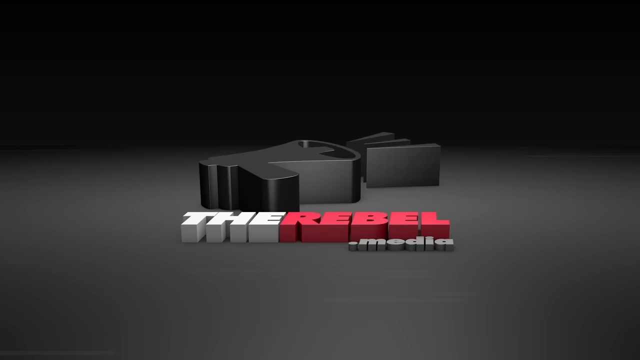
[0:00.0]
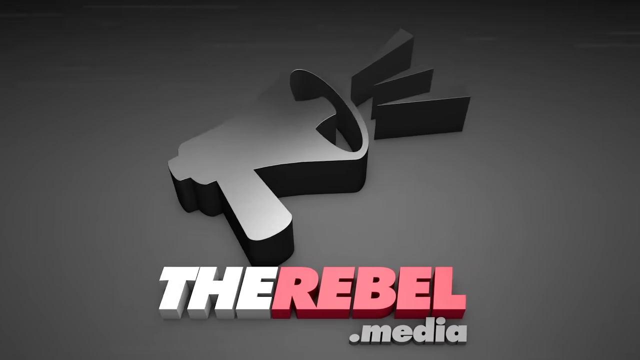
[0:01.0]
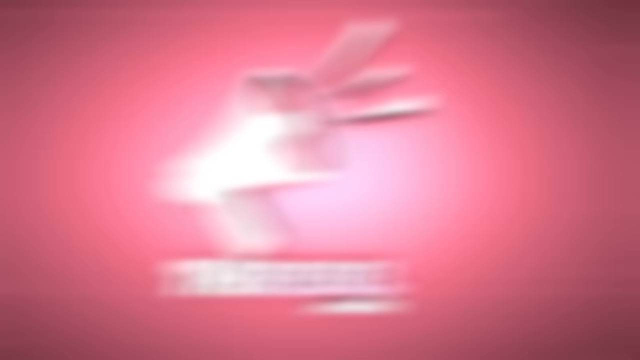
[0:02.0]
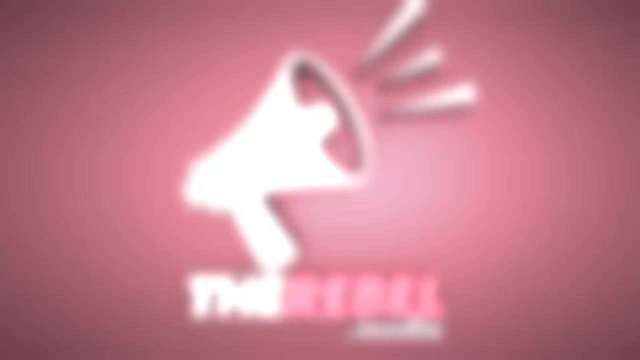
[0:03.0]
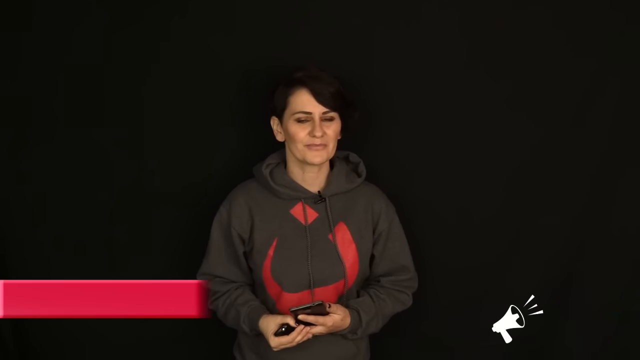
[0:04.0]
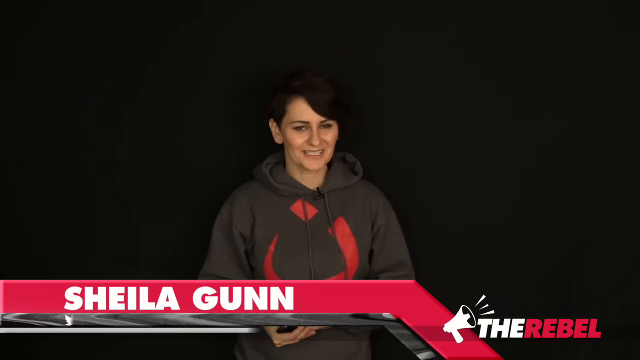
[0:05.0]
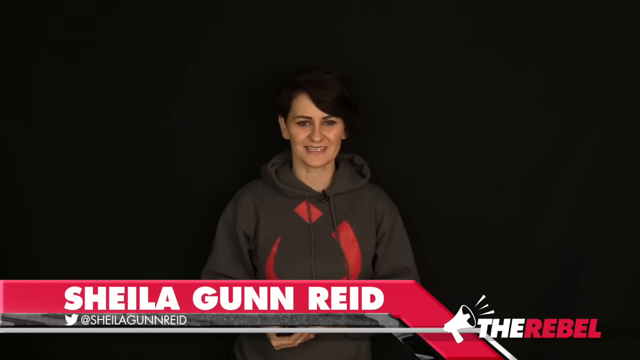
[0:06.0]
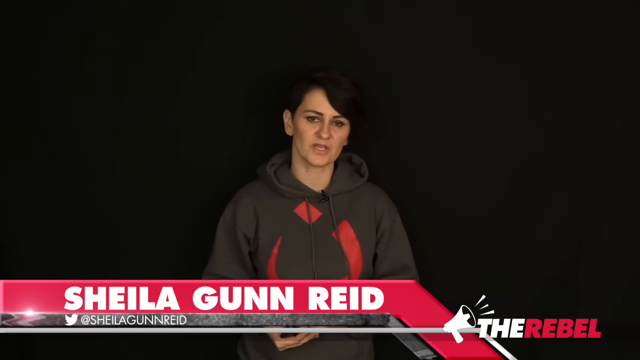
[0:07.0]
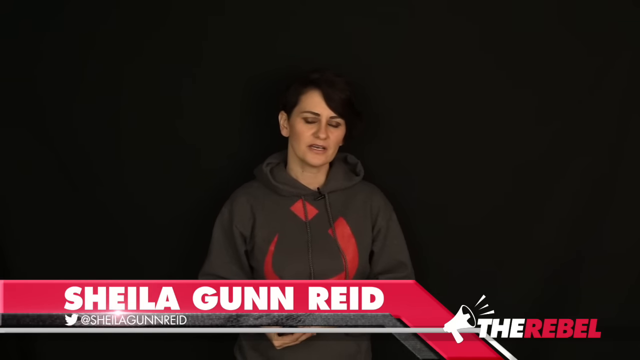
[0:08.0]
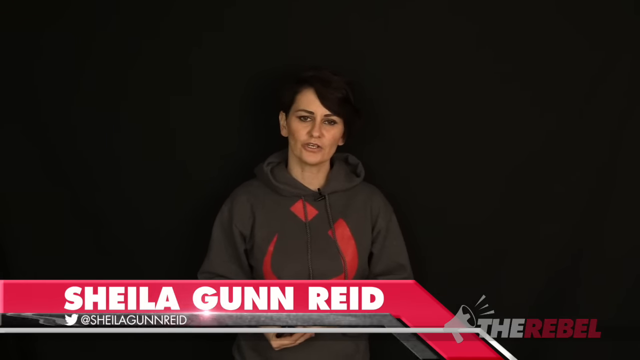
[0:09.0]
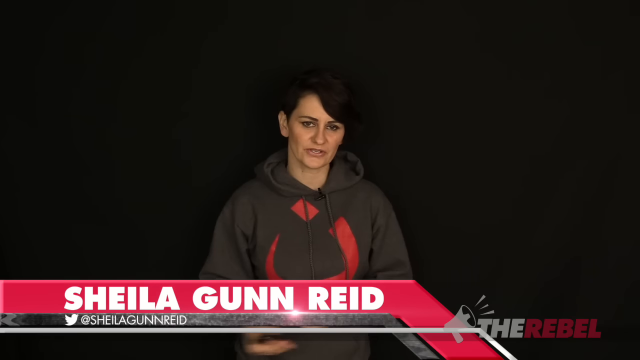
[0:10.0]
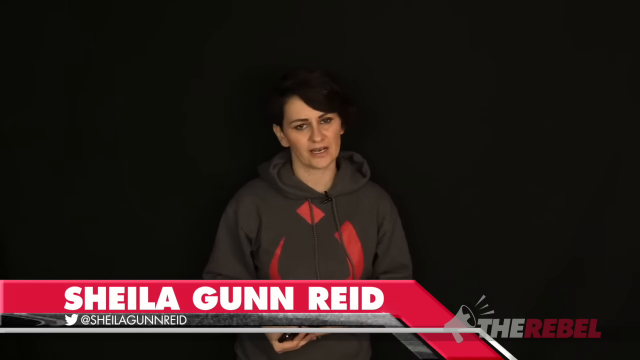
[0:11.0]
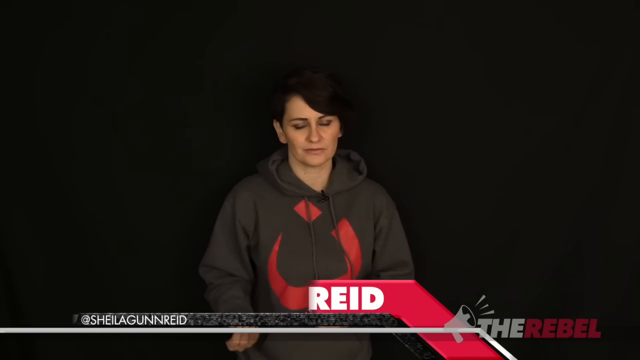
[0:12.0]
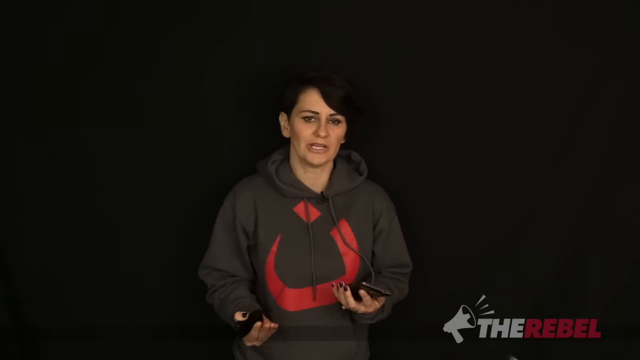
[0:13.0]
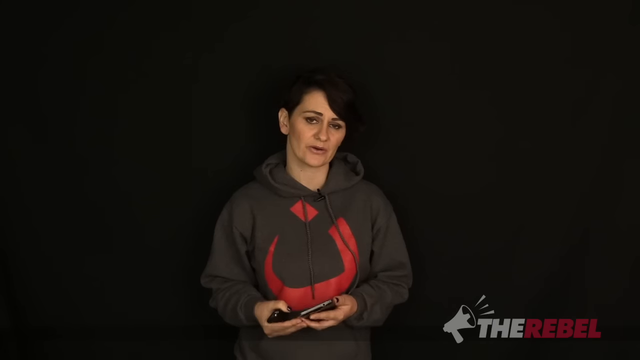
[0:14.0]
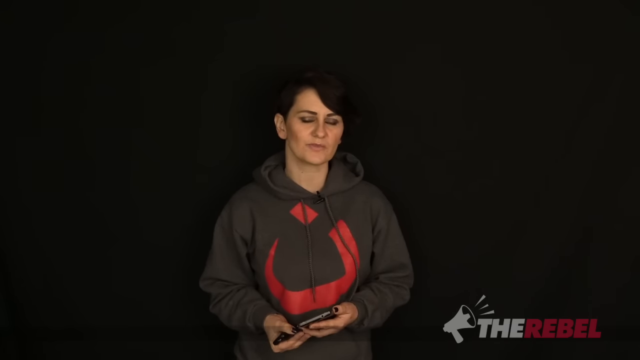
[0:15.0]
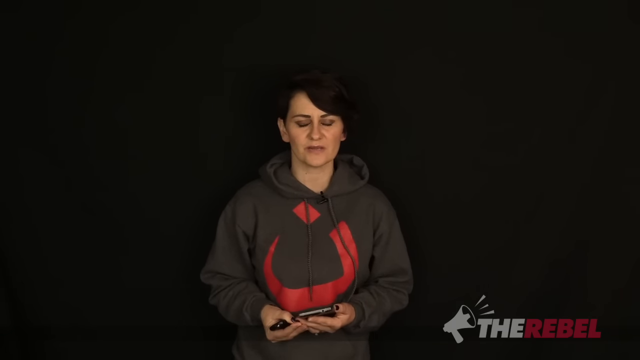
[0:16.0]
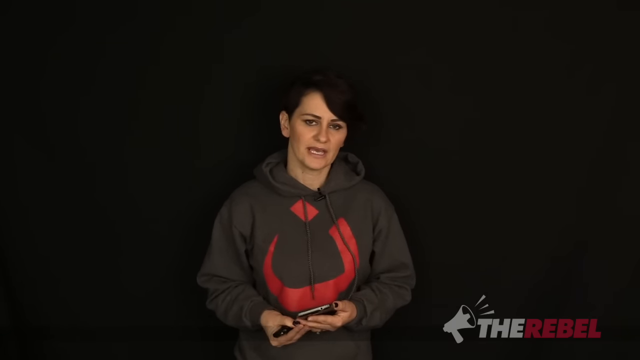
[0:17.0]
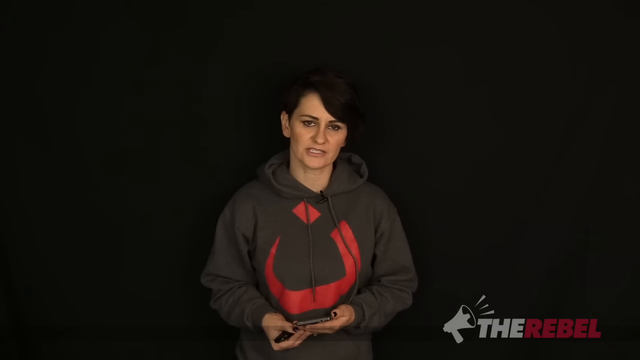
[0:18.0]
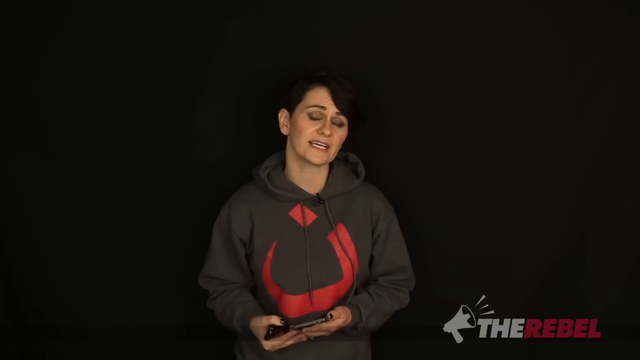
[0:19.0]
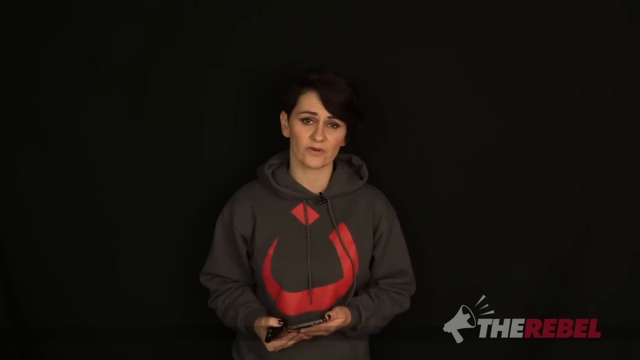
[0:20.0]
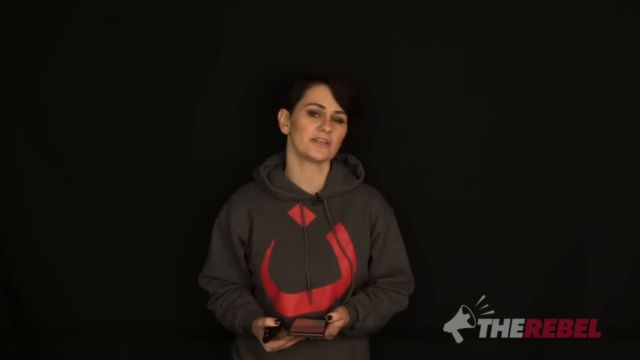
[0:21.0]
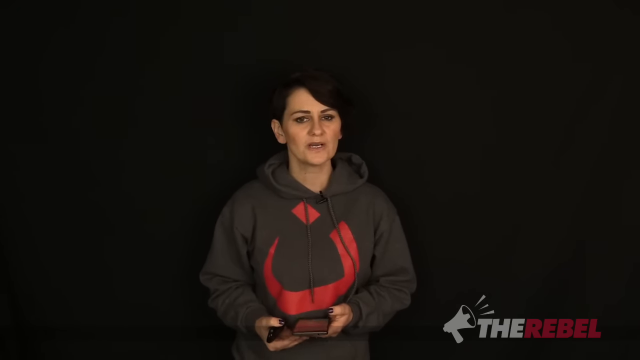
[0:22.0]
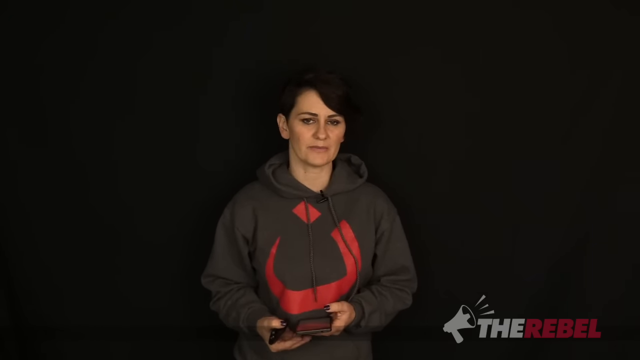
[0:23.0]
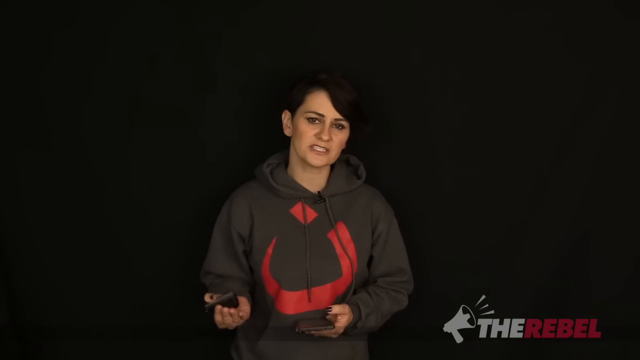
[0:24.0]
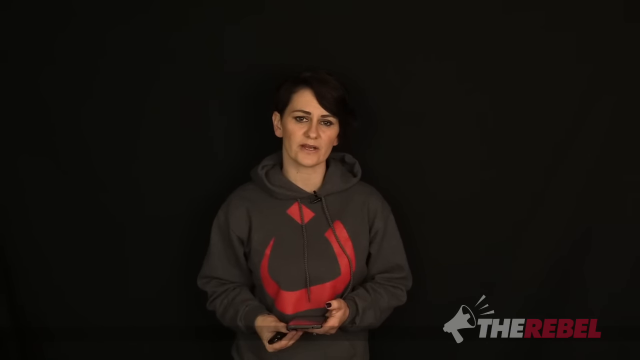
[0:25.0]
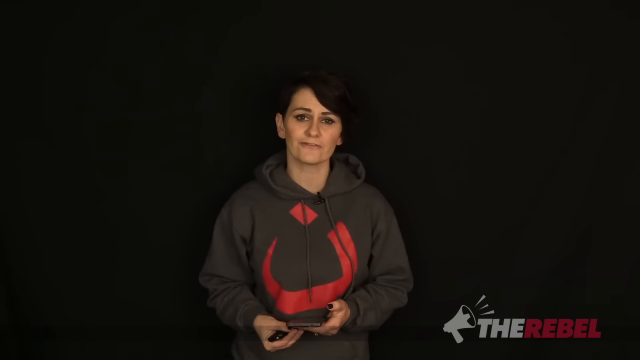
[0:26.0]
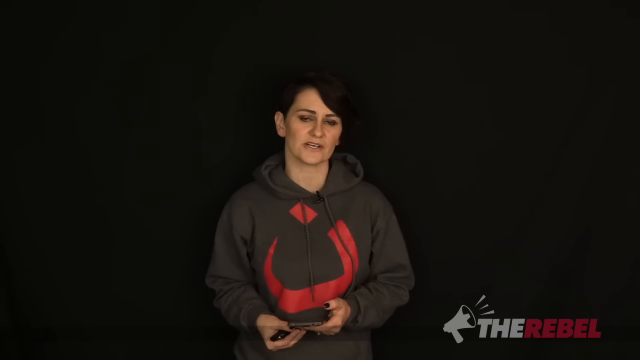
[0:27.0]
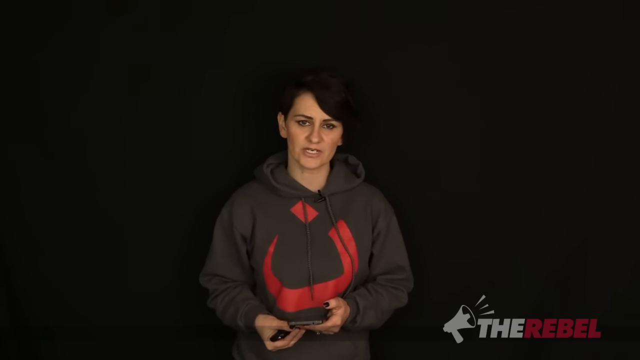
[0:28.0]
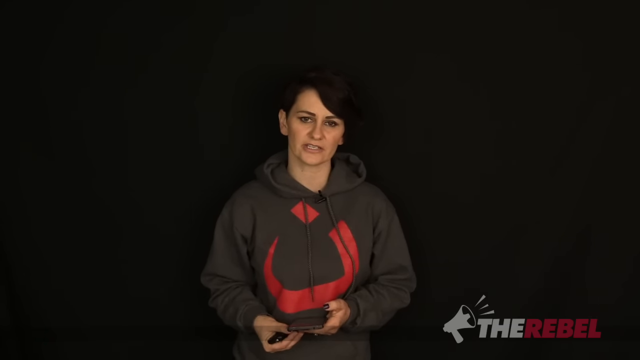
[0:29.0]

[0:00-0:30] An animation opens for what appears to be a YouTube channel or possibly a news platform called The Rebel Media, whose icon is some kind of voice amplifier. The newscaster is then identified as Sheyla Gunrayd, and she is shown to have a Twitter channel as well. She wears a black hoodie with some kind of red design on it, and her black hair blends into the black background. She holds a phone in her left hand, and in her right hand she has some kind of device, possibly used to change presentation slides. She makes motions toward the camera, moves her head a lot and speaks with strong emphasis on certain words. The voice amplifier logo appears in the bottom right corner of the screen.